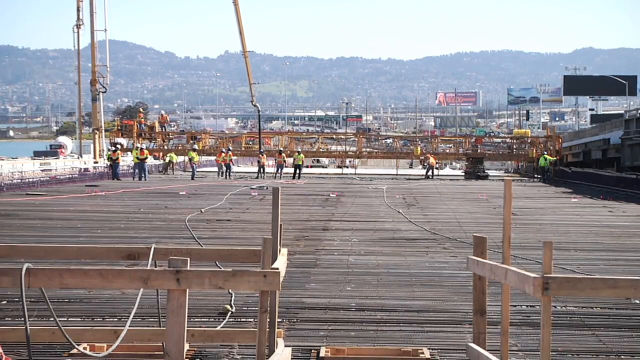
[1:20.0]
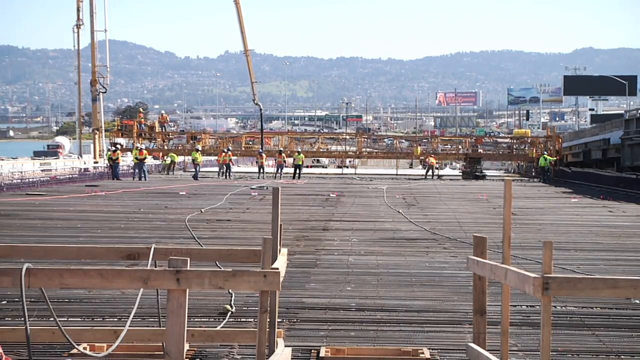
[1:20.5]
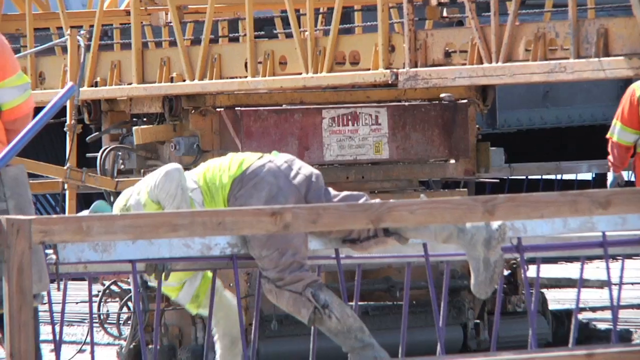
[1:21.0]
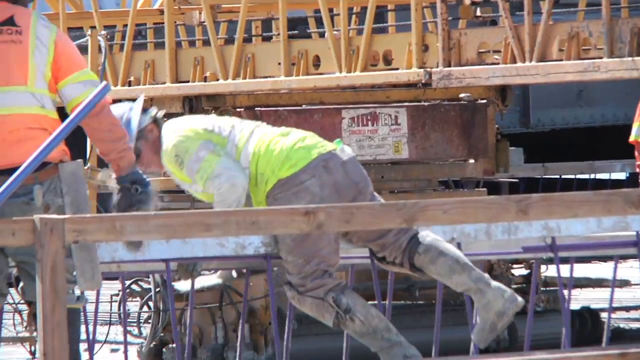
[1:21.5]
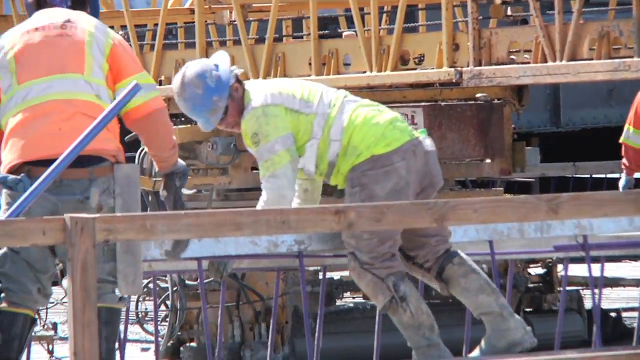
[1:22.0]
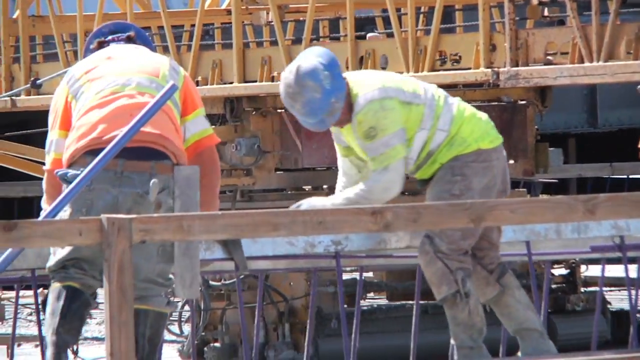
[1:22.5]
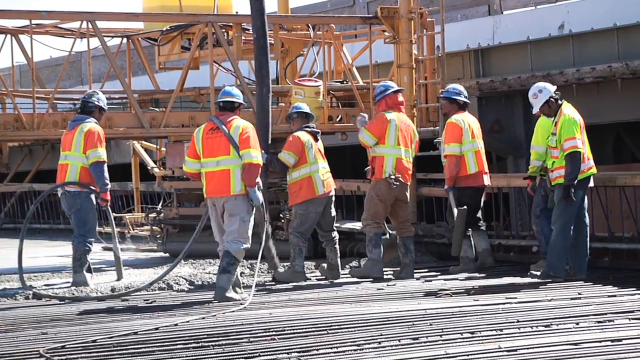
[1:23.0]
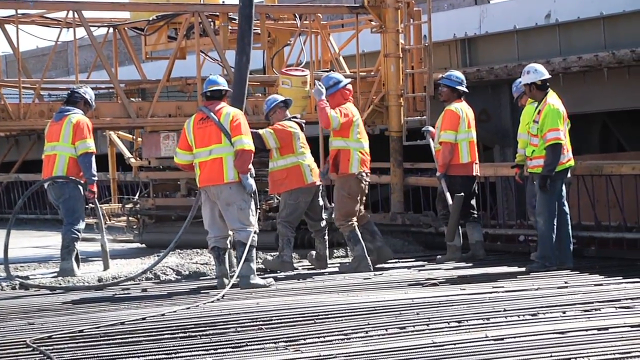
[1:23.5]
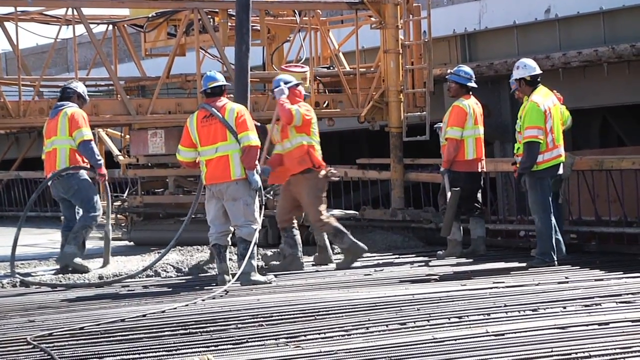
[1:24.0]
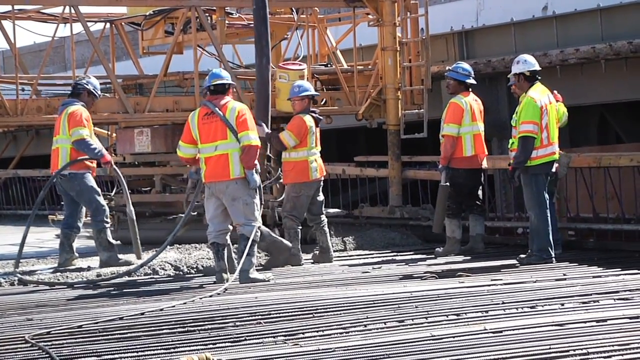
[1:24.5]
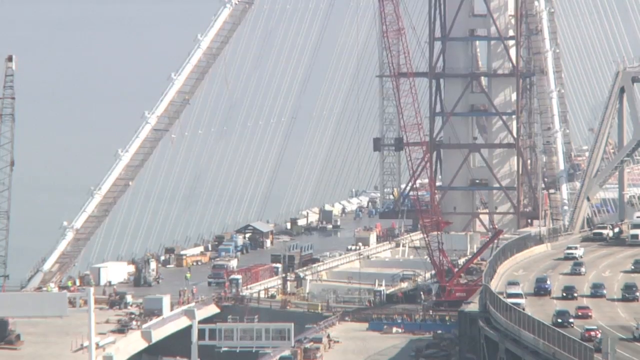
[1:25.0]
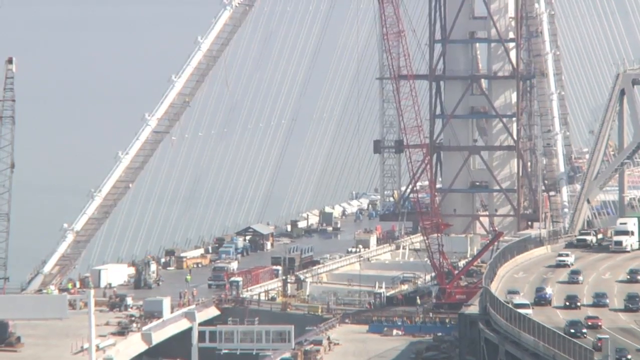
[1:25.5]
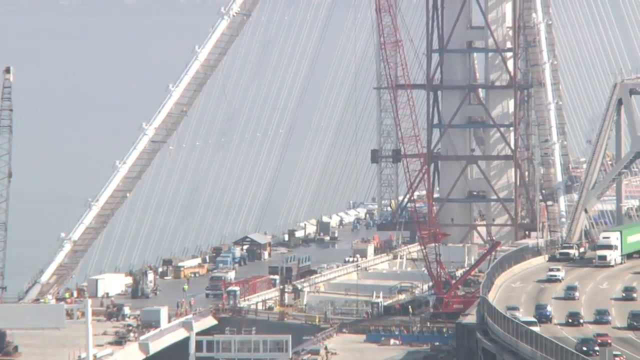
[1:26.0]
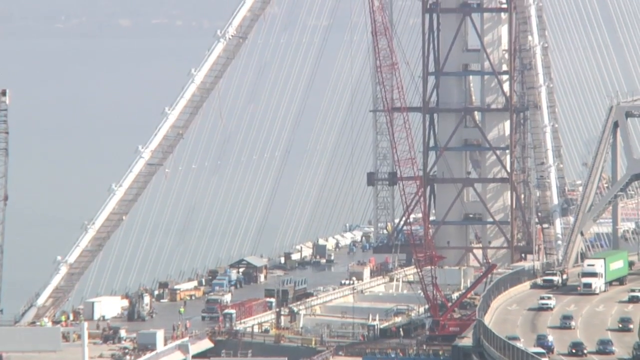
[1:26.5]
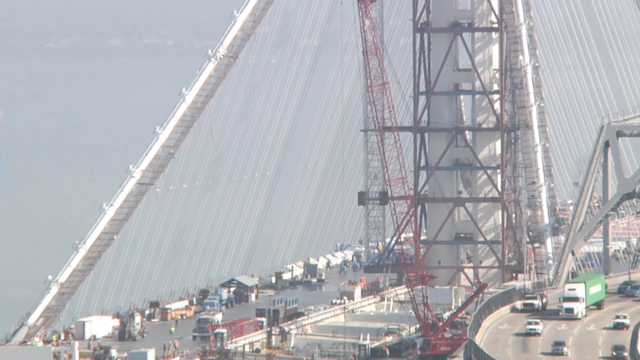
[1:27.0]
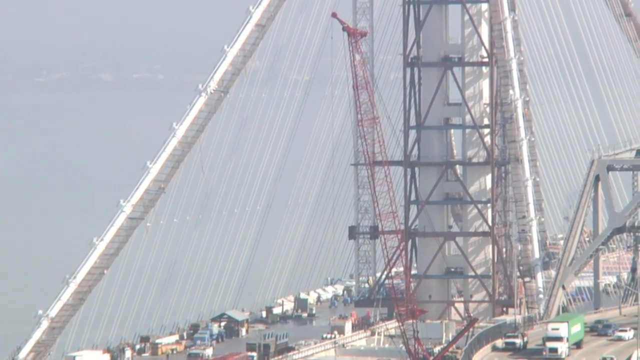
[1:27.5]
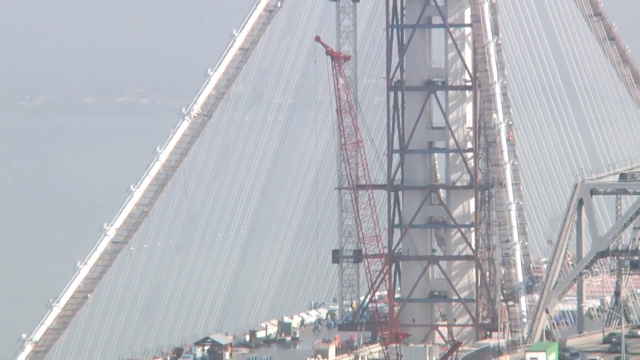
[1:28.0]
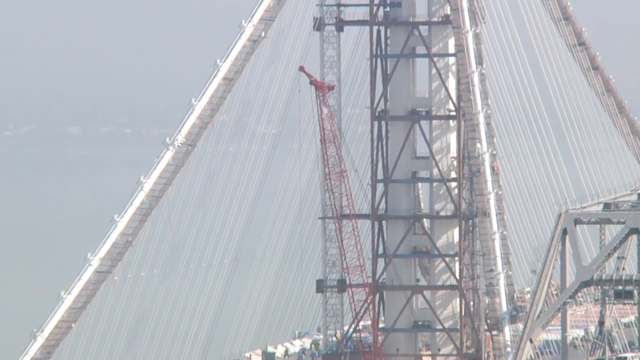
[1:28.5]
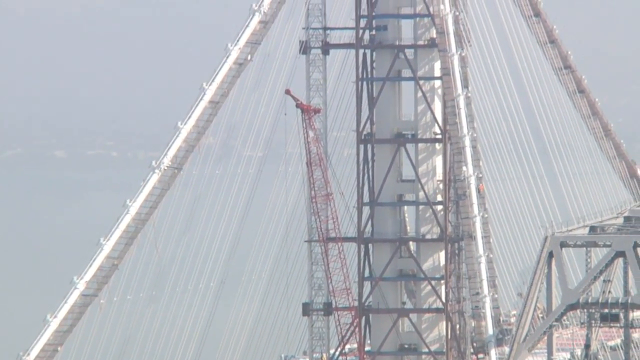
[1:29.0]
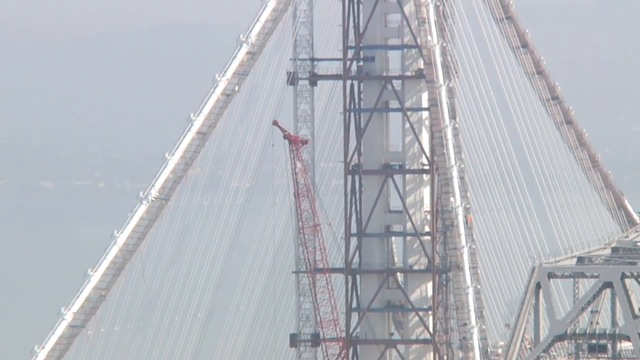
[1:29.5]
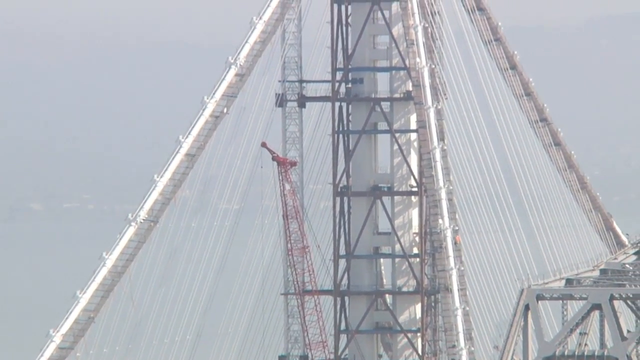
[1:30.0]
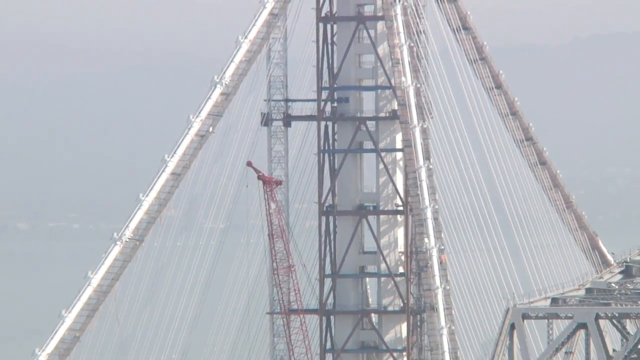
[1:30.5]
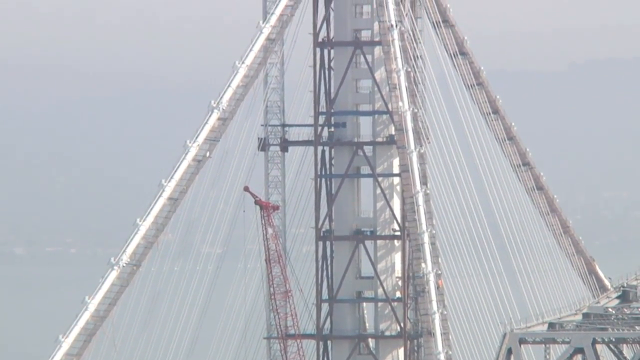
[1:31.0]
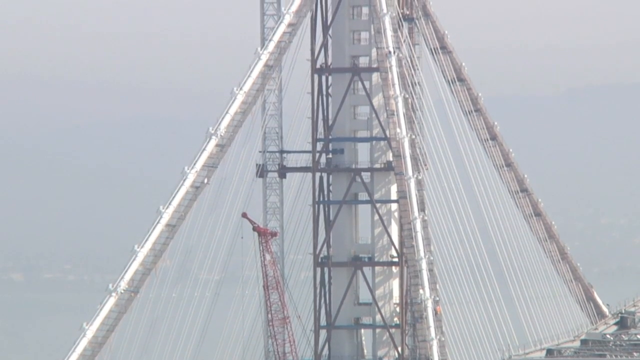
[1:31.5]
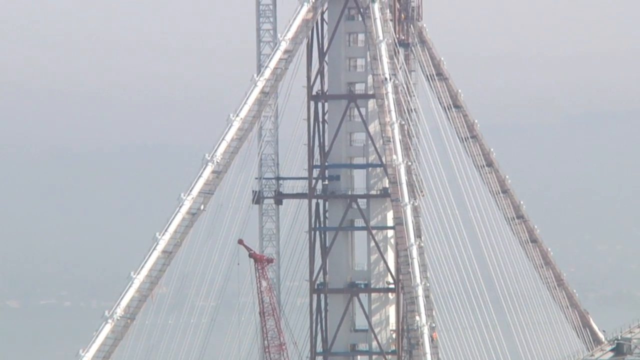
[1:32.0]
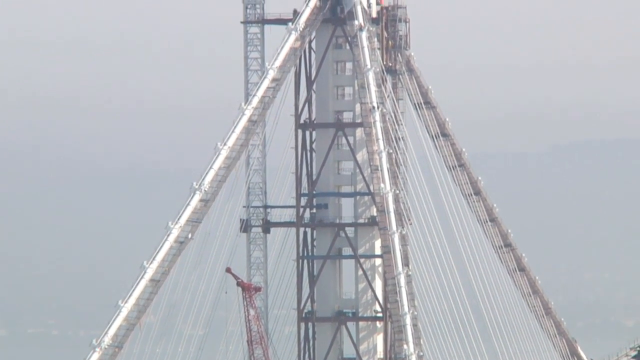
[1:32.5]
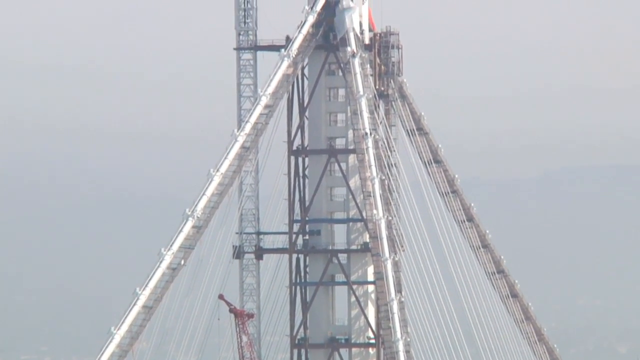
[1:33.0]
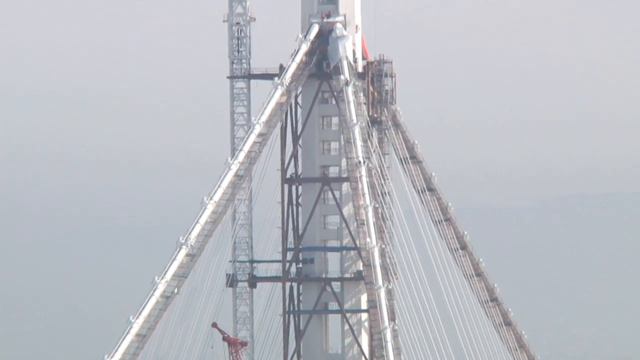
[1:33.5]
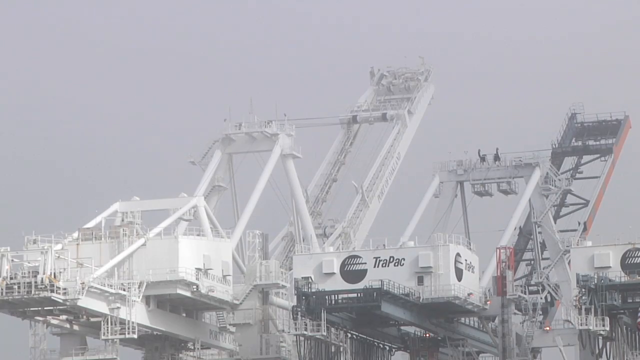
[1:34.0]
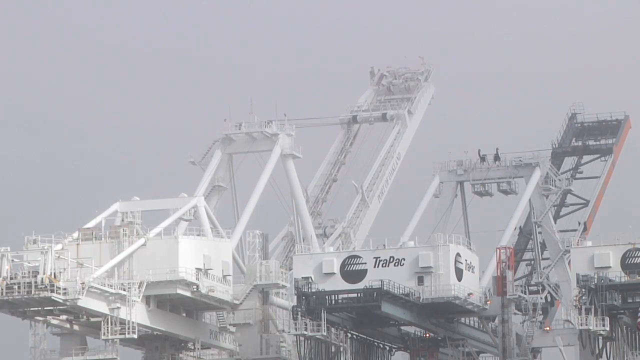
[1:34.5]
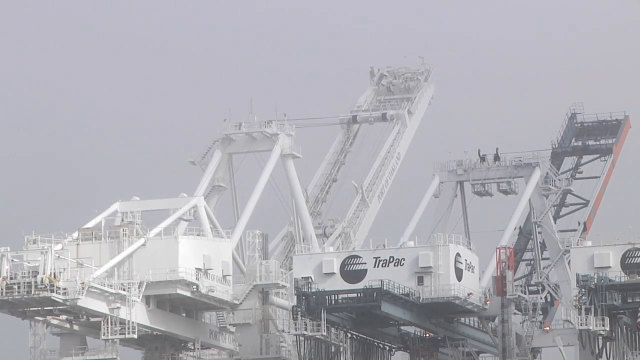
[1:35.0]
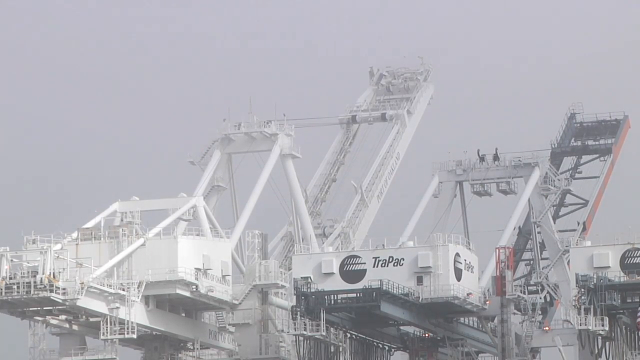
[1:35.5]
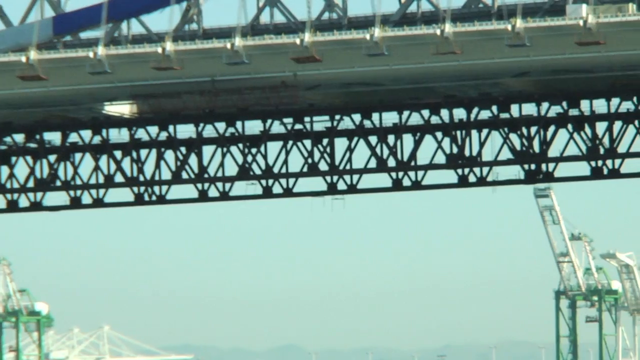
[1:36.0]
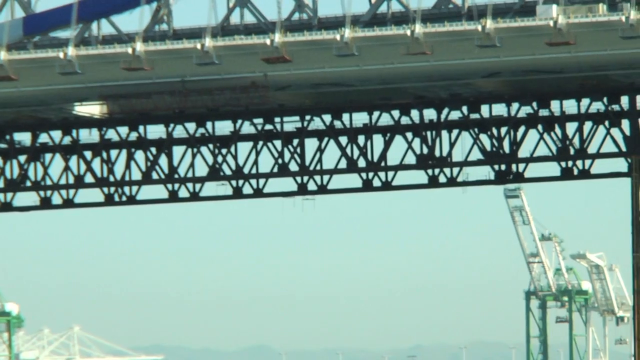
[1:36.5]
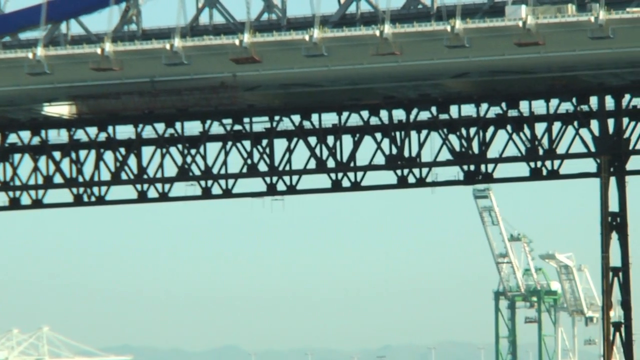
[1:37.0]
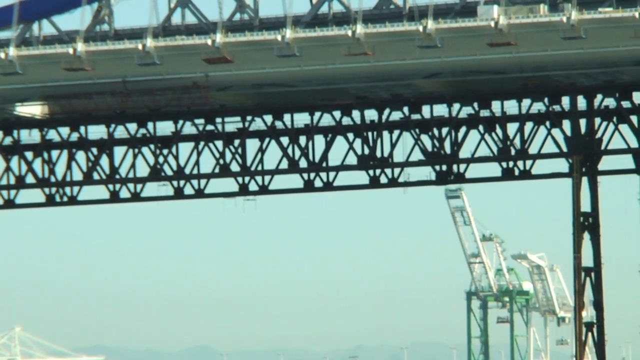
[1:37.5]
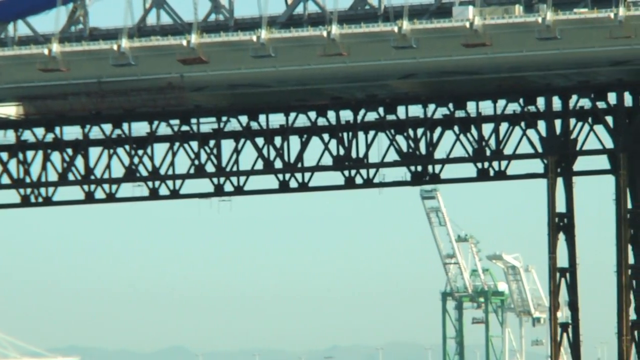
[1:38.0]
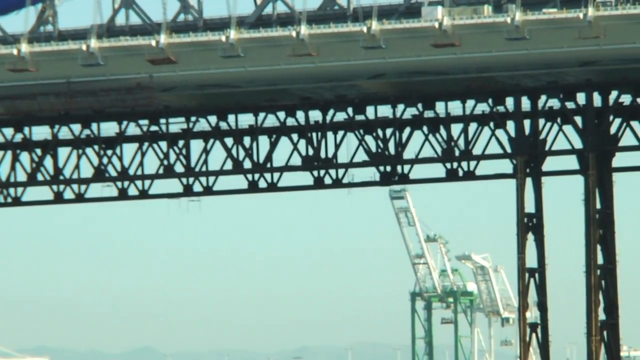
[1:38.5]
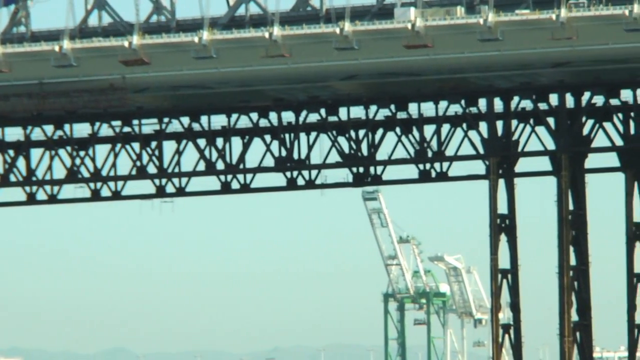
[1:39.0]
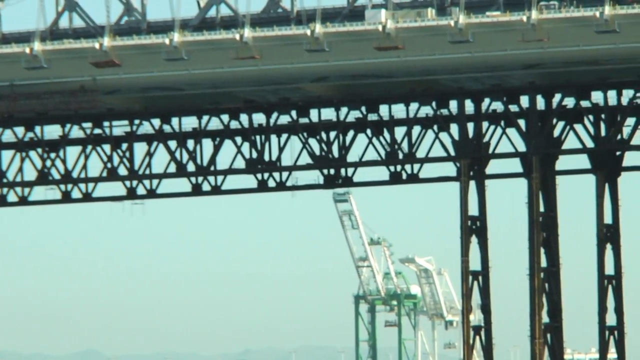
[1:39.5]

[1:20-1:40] Workers are working on a metal platform full of metal tubes, and some cables can be seen hanging from wooden fences in front of the camera, reaching as far as the workers. The video shows the men working from different angles and positions. All of them wear orange vests with yellow accents and blue helmets. They continue spreading and preparing the cement that will cover the metal tubes, possibly to form a street and/or sidewalk. Finally, a sequence shows the bridge from an aerial angle. Many cables connect to the column of the structure, and dozens of machines surround it.